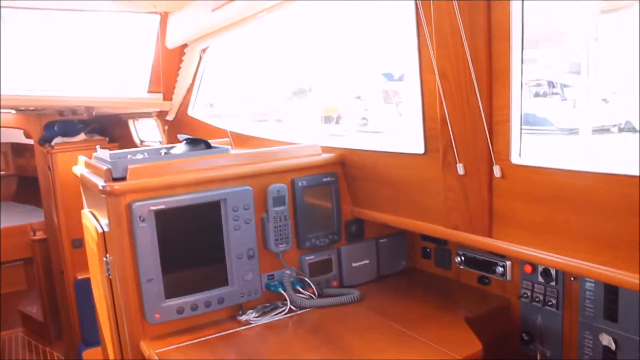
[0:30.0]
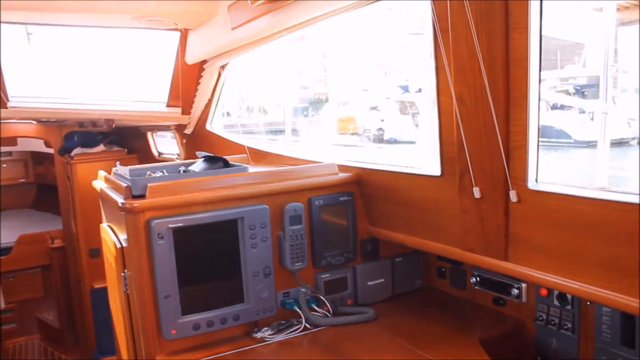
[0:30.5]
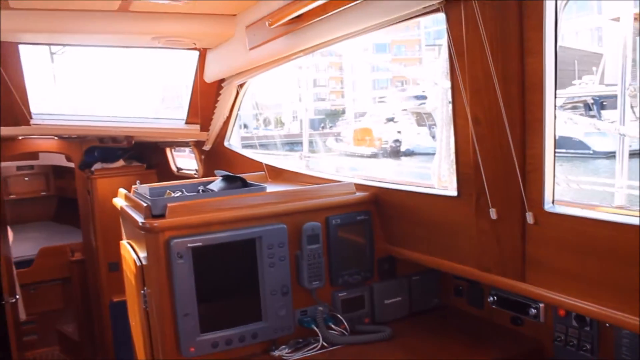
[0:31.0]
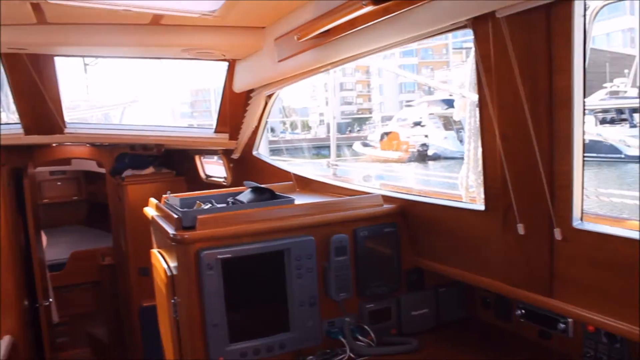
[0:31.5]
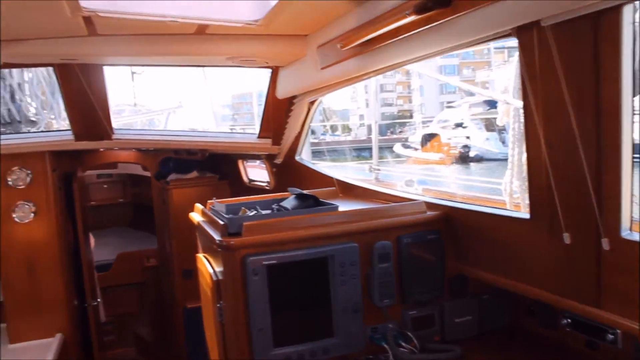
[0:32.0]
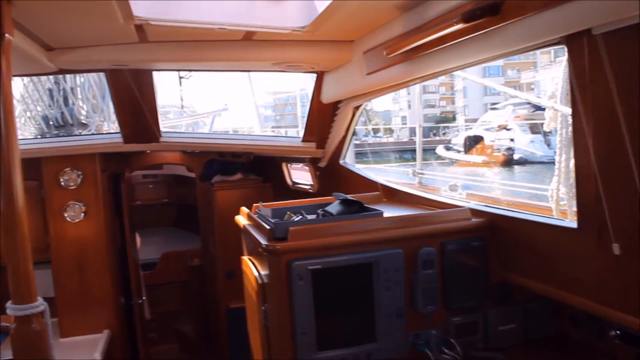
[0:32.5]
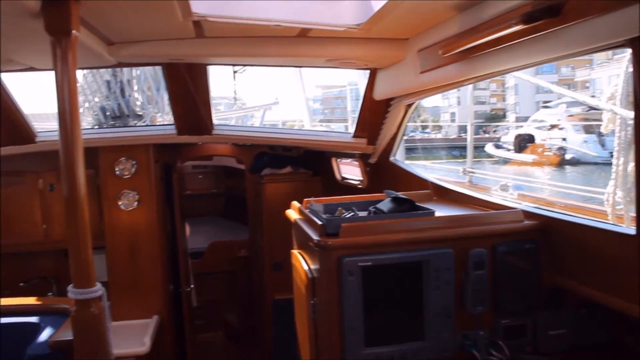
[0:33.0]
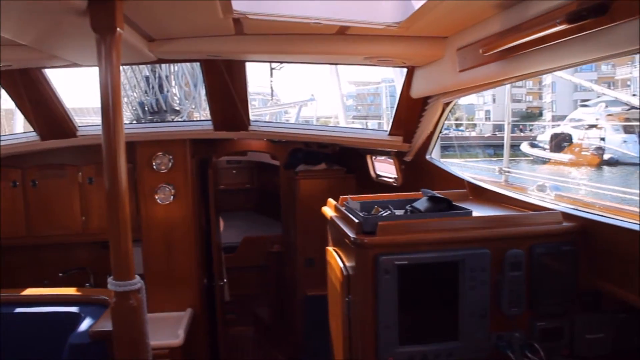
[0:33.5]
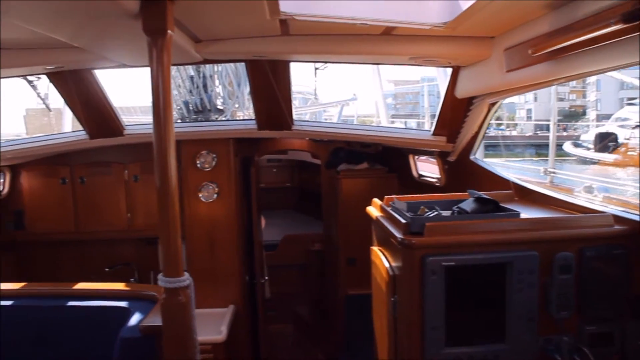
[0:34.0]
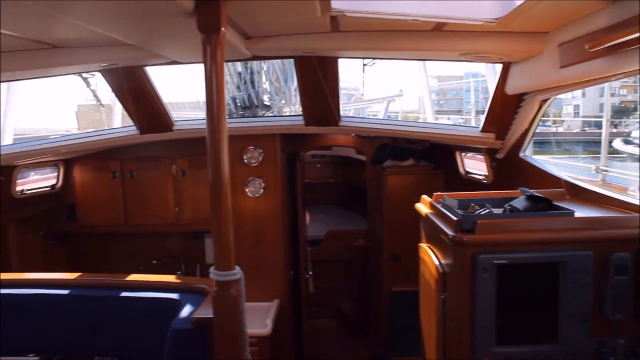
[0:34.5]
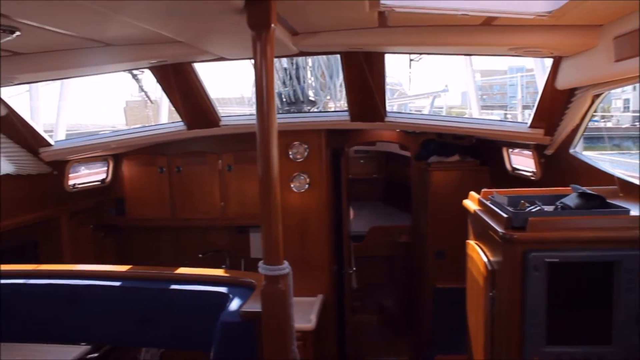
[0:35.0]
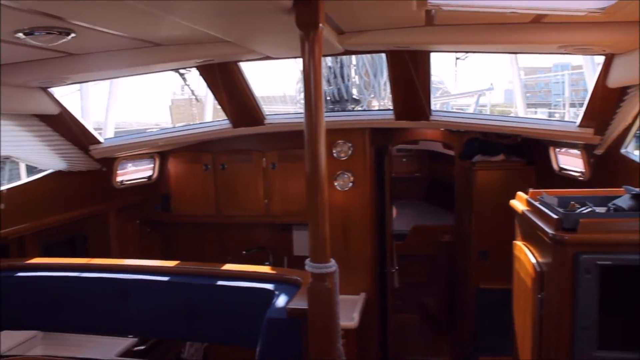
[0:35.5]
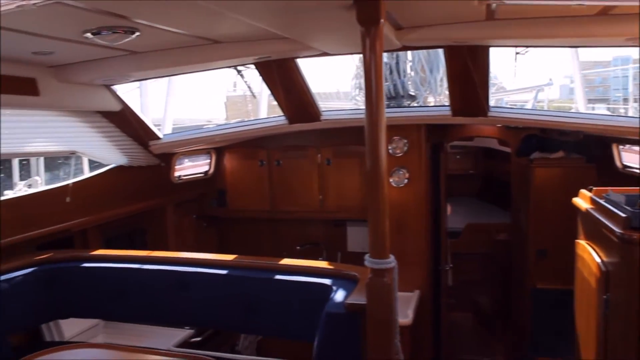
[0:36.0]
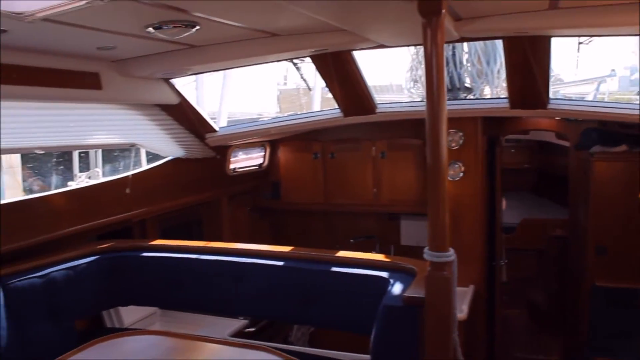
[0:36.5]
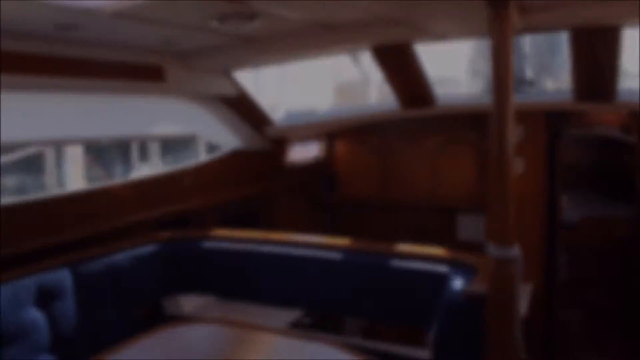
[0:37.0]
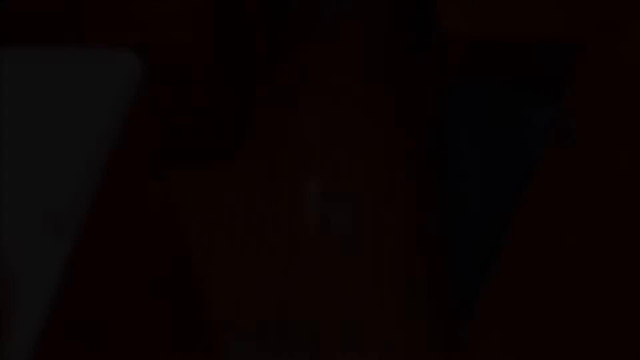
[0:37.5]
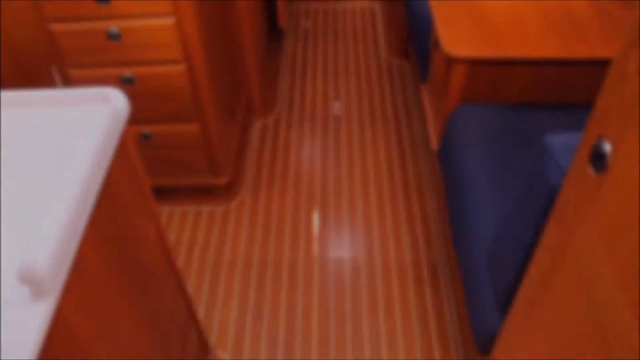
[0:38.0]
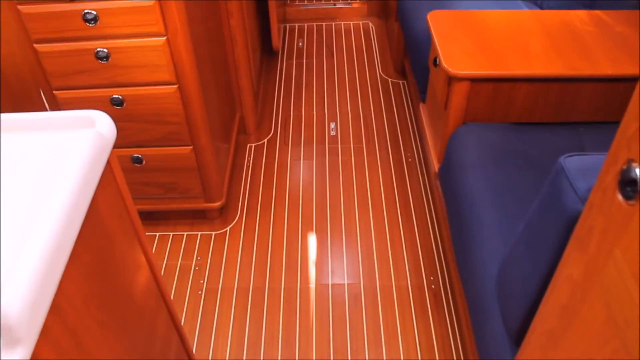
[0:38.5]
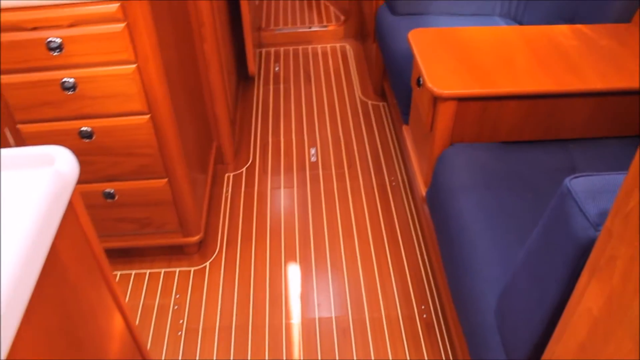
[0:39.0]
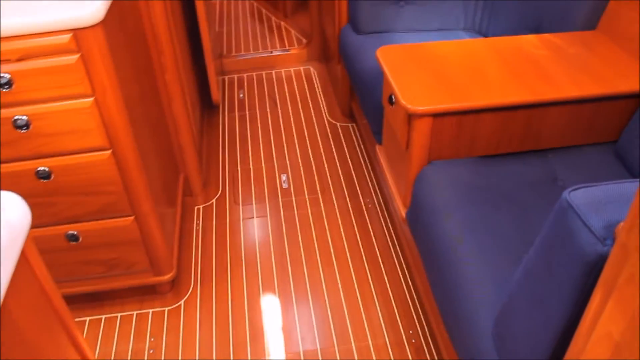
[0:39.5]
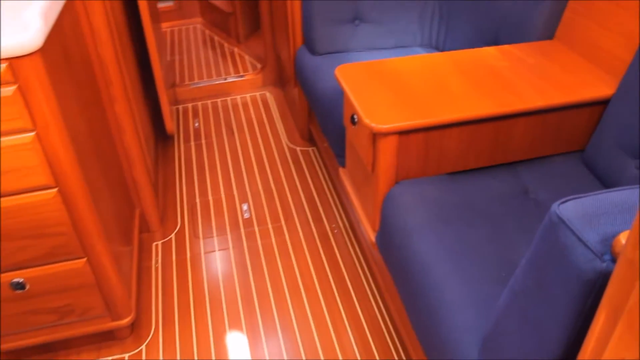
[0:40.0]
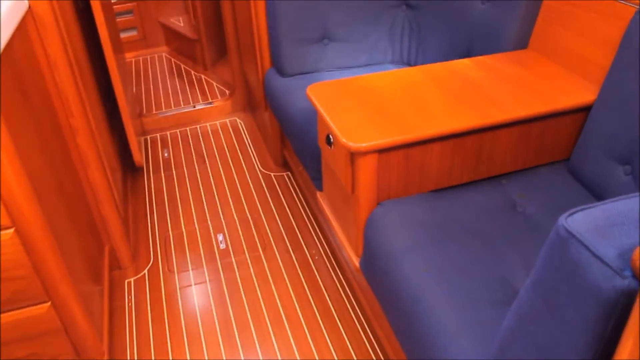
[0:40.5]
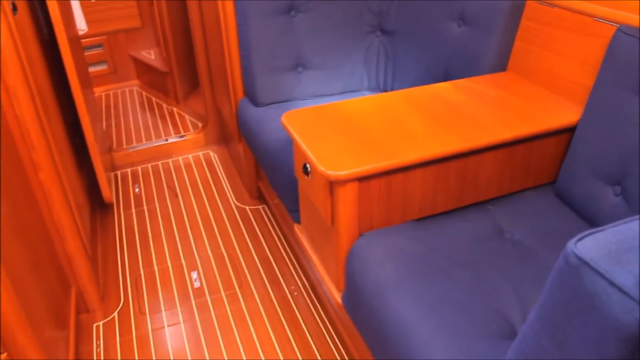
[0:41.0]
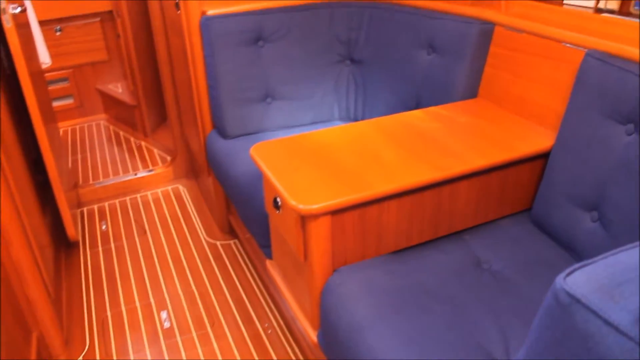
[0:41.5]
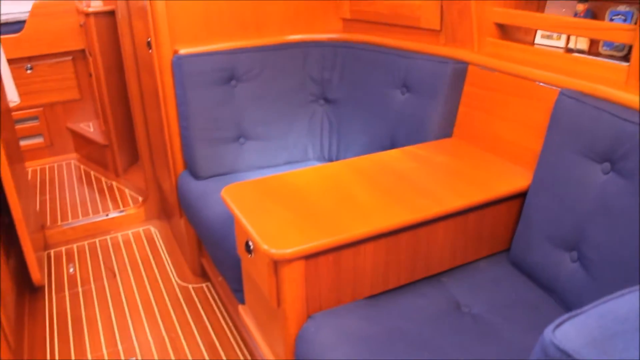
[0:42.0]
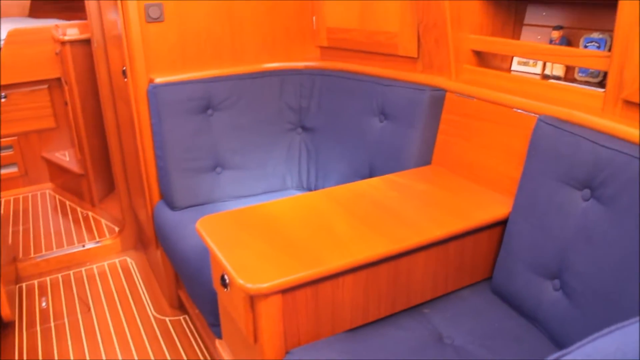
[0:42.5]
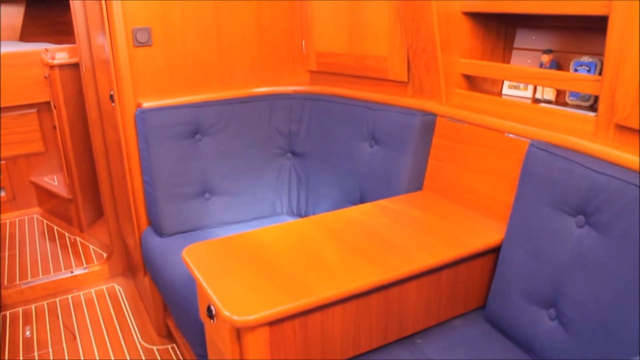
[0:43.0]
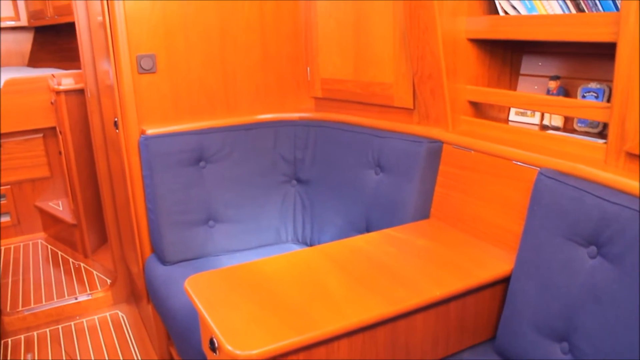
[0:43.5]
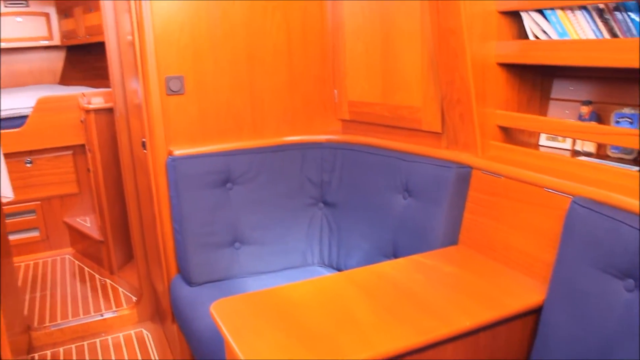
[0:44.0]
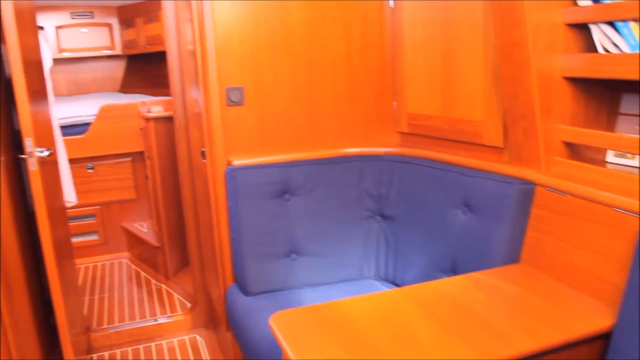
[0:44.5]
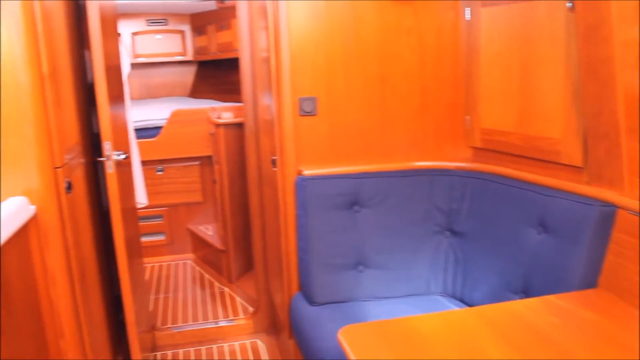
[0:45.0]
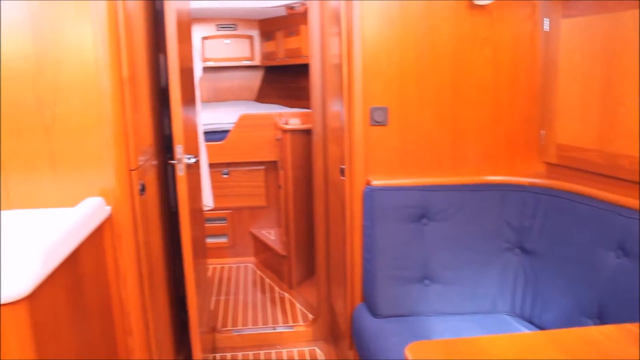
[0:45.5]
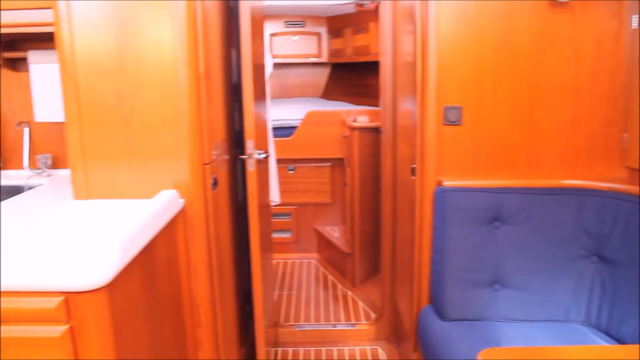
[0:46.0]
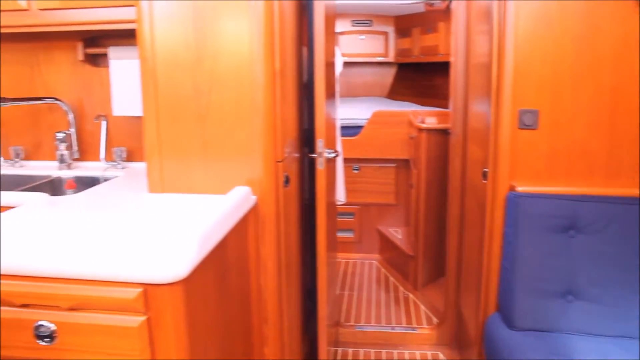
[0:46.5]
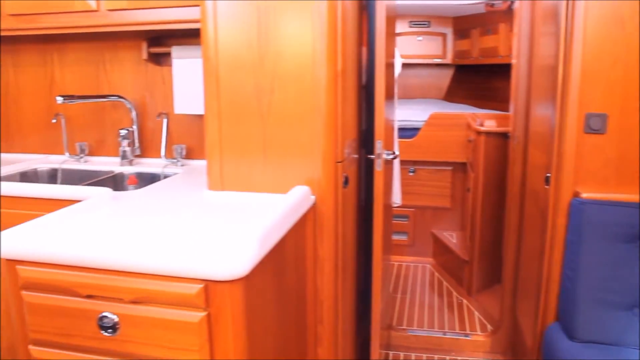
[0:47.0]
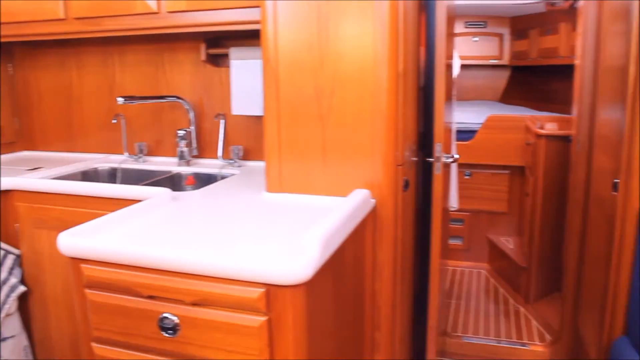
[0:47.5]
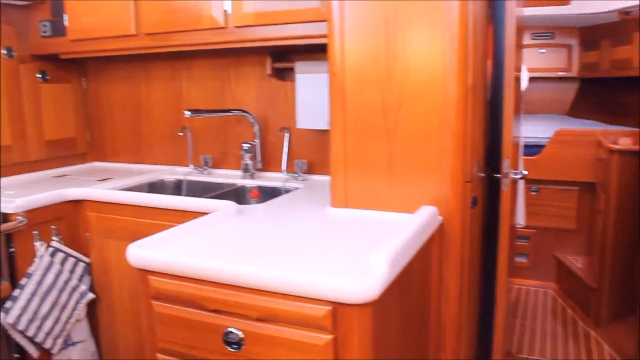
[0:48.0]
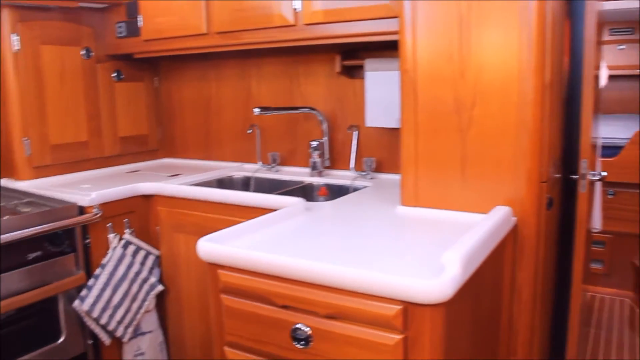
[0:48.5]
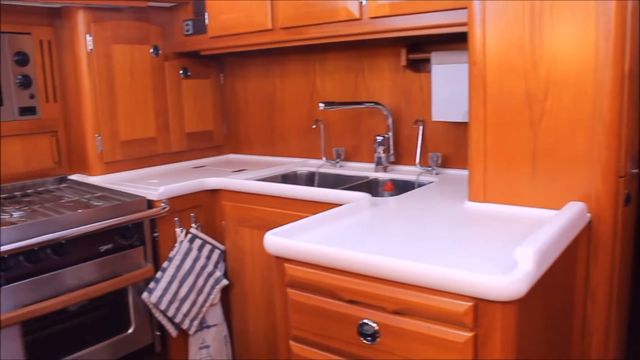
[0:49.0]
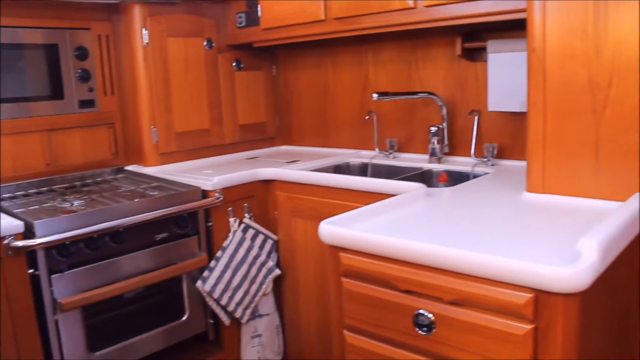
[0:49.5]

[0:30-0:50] The camera goes upward, showing the windows of the boat from the inside and the view outside, where what look like some buildings are visible. The camera moves to the left, and the buildings continue to be seen through the windows. The scene shifts to another part of the boat, with seating areas to the right and what looks like a small kitchen to the left. The kitchen area has a counter, a sink on its right side, and a silver oven to the left of the sink.